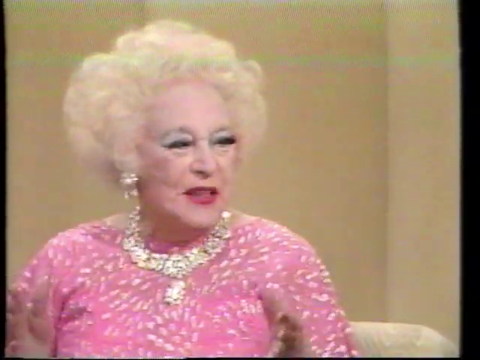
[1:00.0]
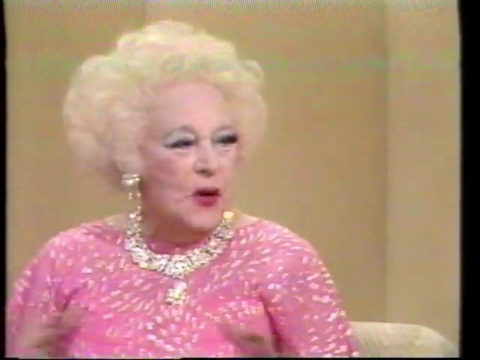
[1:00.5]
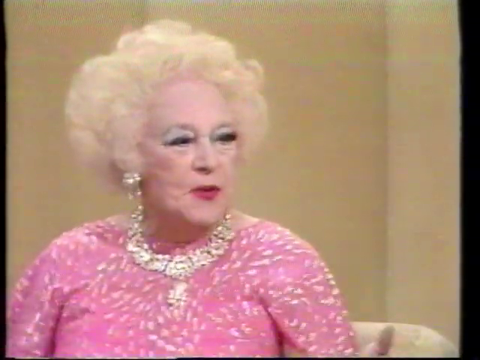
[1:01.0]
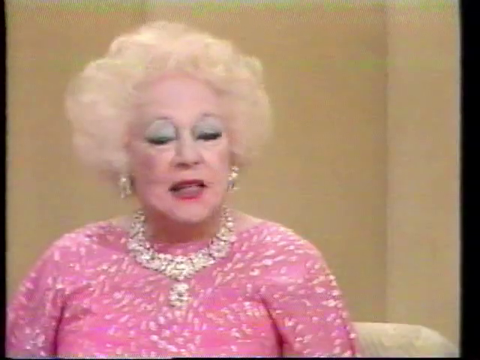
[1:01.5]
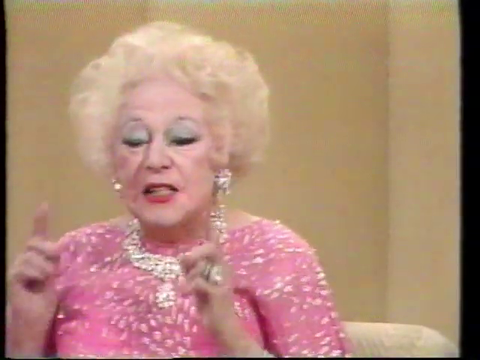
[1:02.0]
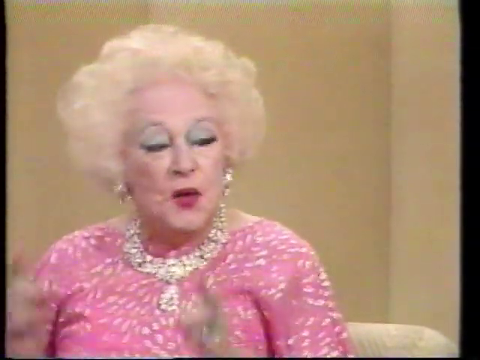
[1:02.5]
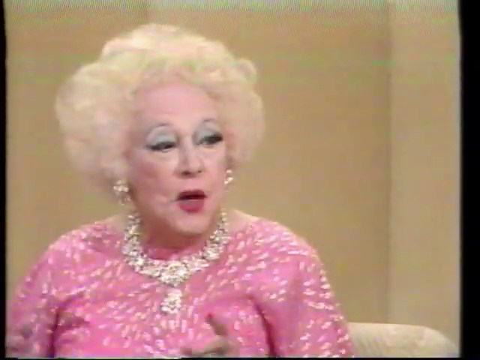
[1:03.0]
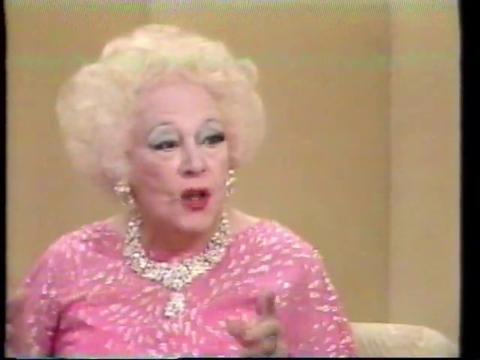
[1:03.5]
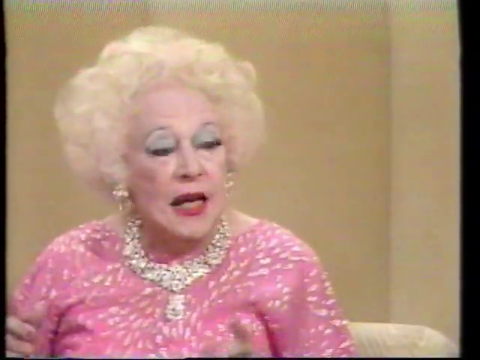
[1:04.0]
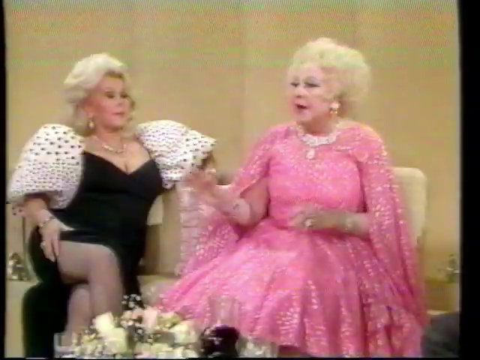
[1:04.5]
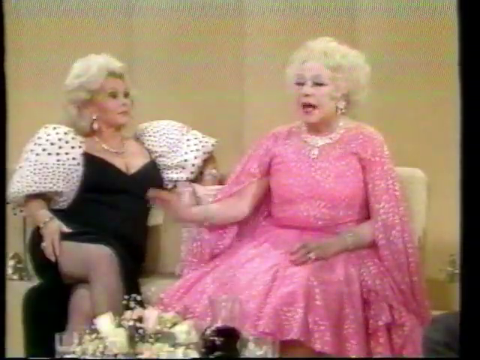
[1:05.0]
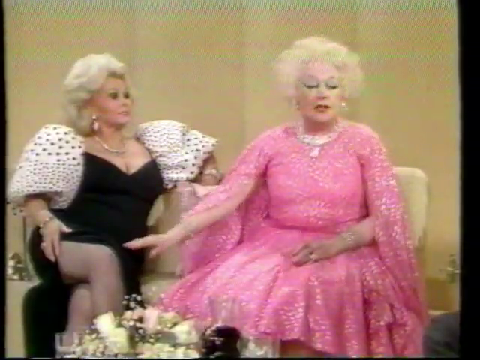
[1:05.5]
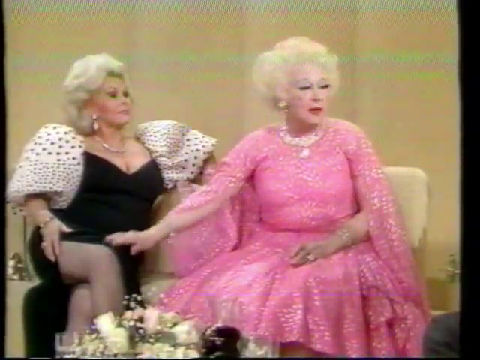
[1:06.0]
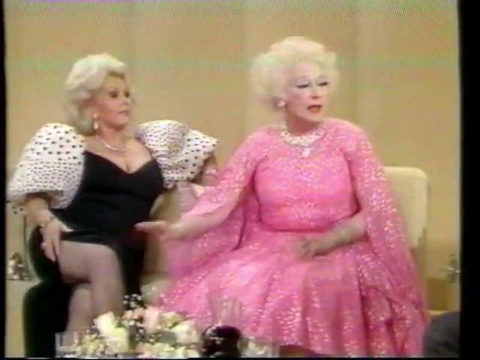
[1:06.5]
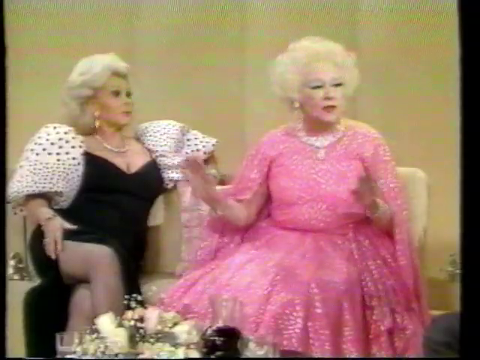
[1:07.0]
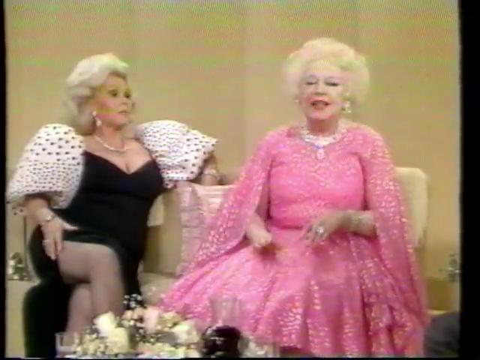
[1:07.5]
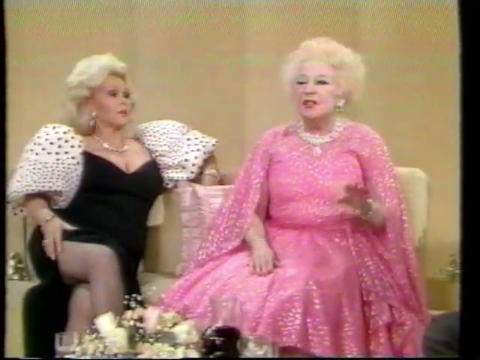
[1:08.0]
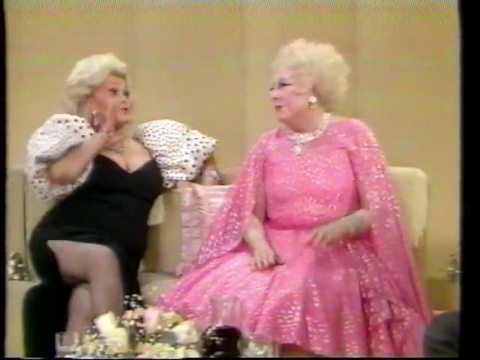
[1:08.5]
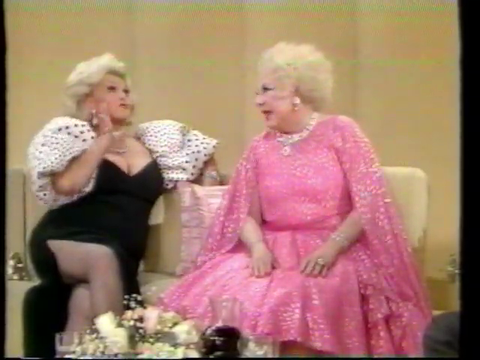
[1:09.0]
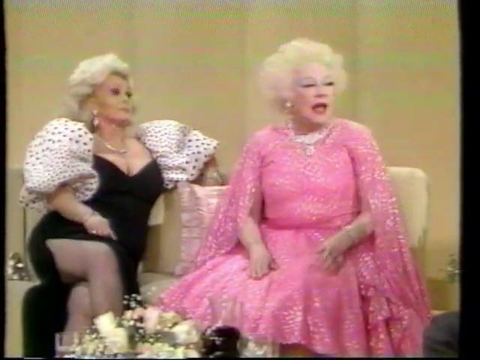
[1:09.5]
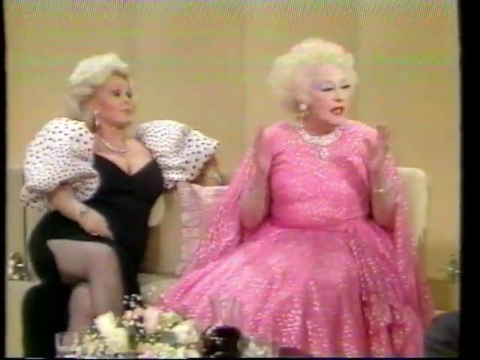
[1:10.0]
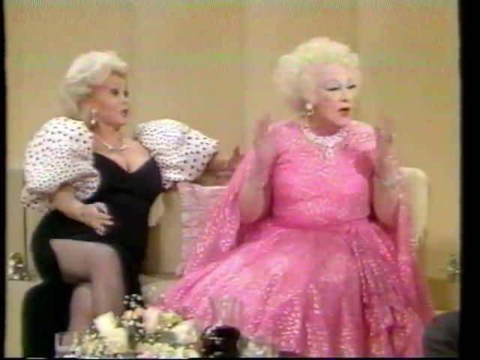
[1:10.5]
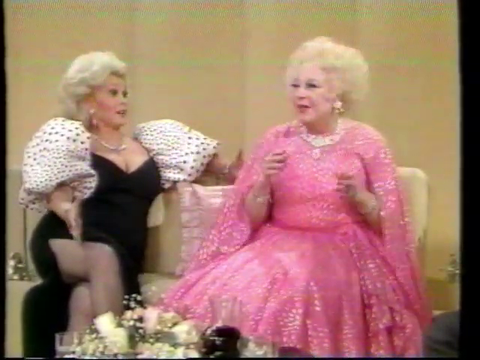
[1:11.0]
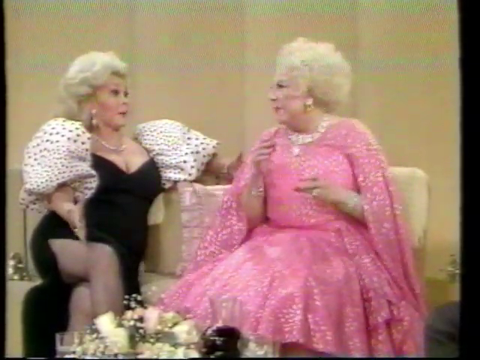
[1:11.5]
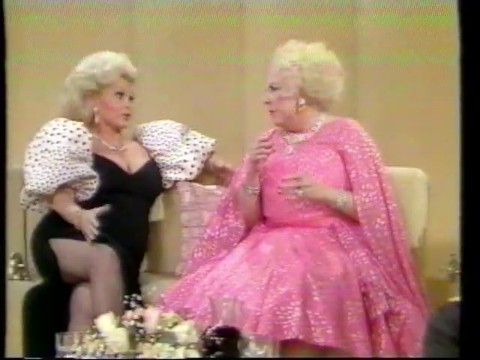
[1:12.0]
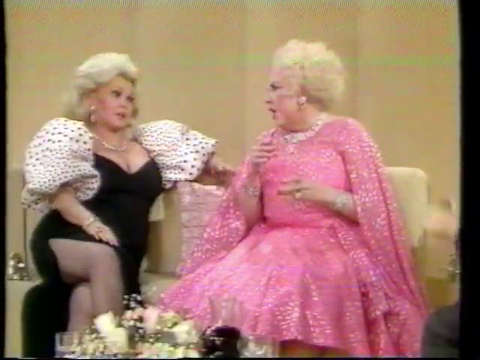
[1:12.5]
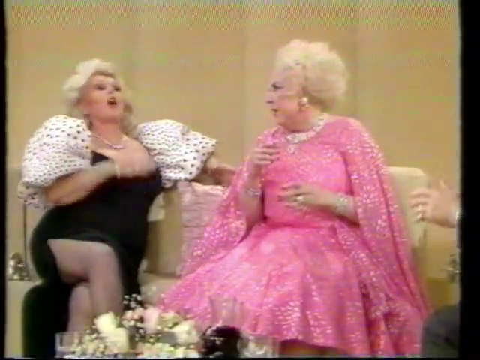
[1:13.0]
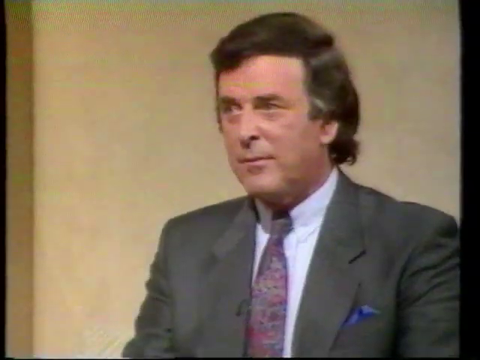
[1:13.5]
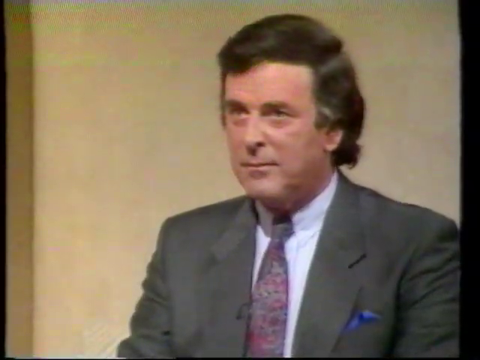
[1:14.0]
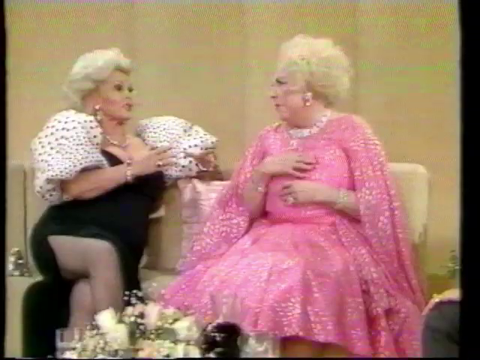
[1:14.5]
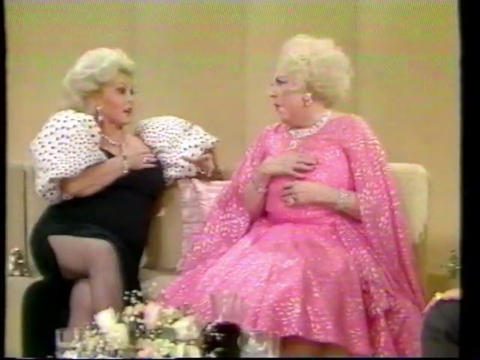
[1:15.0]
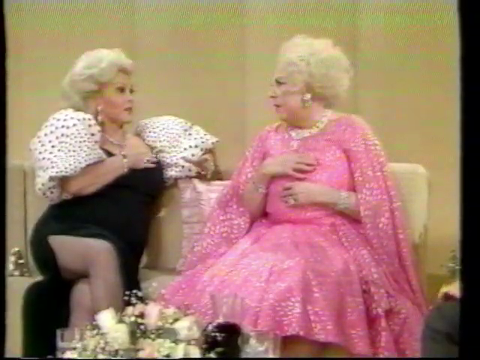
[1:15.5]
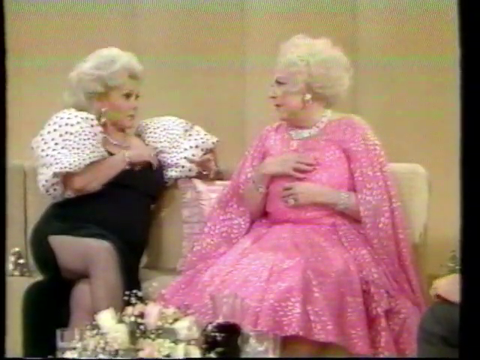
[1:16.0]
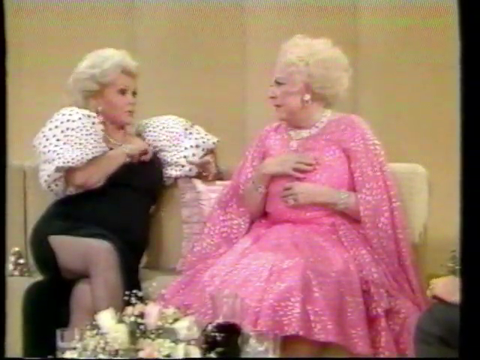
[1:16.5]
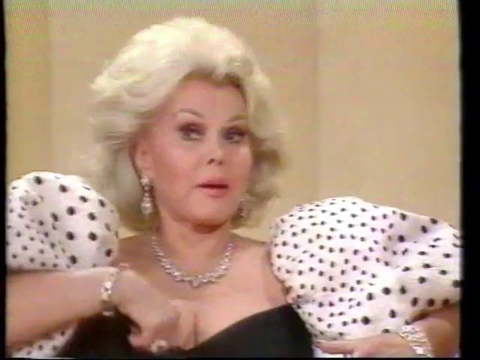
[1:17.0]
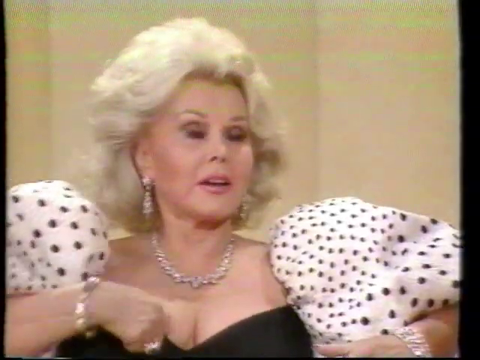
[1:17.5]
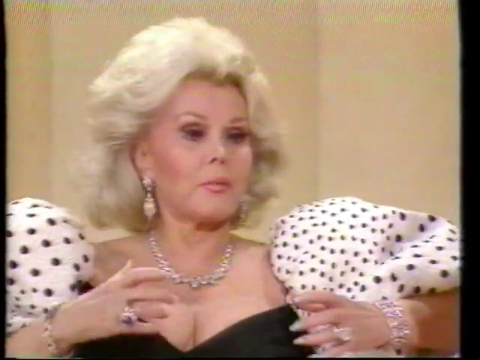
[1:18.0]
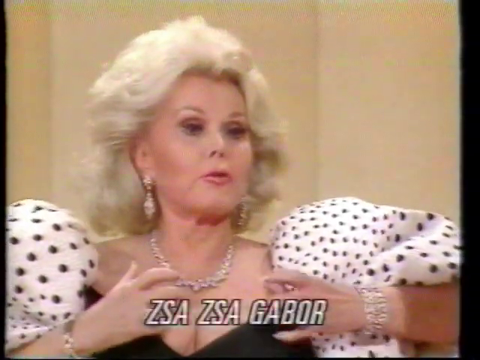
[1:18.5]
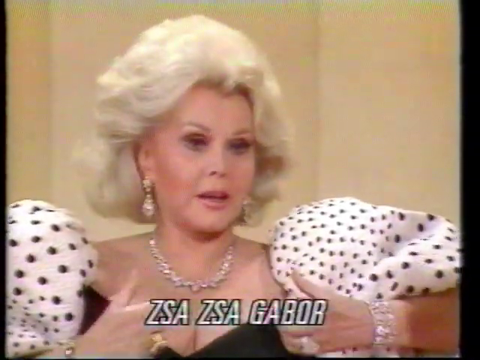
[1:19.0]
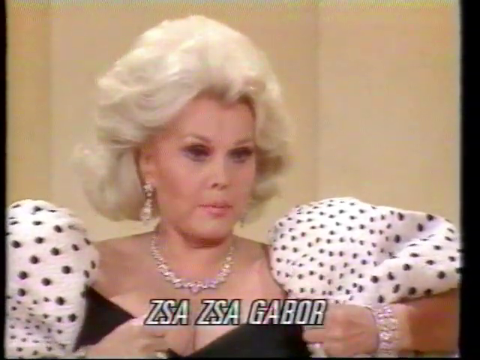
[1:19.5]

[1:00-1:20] The woman in pink, with blonde hair, gestures wildly with her hands as she speaks and taps the woman to her left on the knee with her right hand. The woman on her left, in polka dots, then speaks, gesturing with her right and left hands. She places her right hand on her chest and adjusts her dress, pulling it upwards, before the camera zooms in on her hands and face, with the subtitle "Zaza Gabor" in white text at the bottom of the screen. Both women are most likely famous and being interviewed by the man on the right side of the screen, who wears a grey suit with a light-coloured dress shirt and a red tie and has dark, long, wavy and curly hair. He listens intently as the women speak.